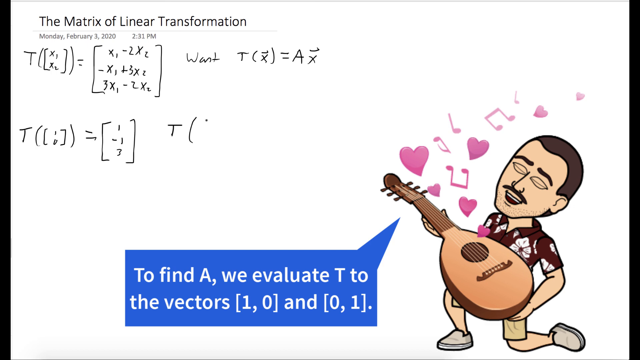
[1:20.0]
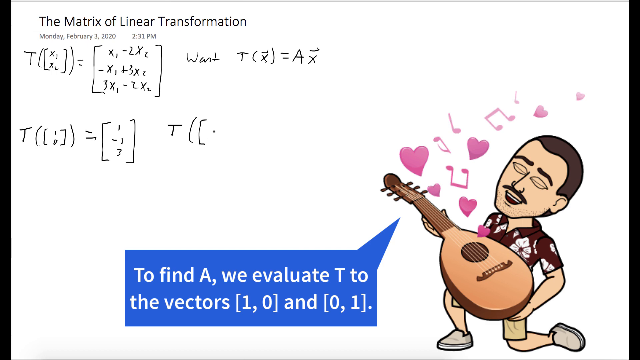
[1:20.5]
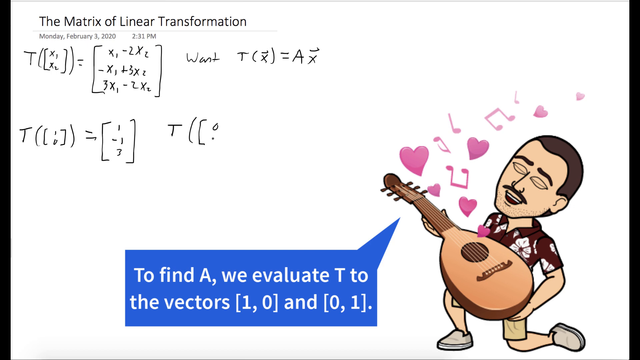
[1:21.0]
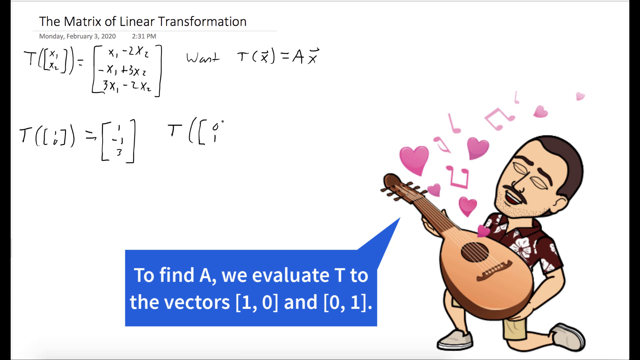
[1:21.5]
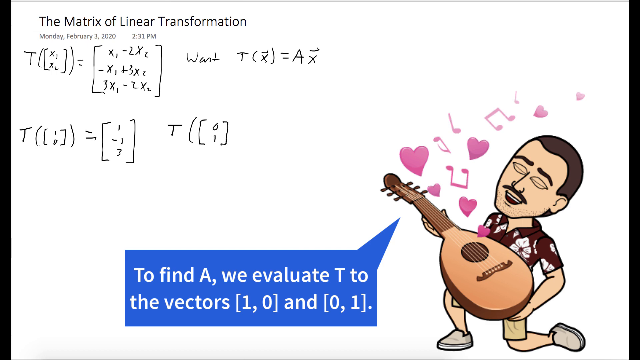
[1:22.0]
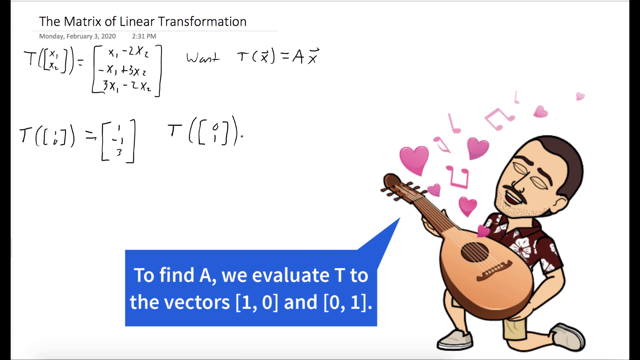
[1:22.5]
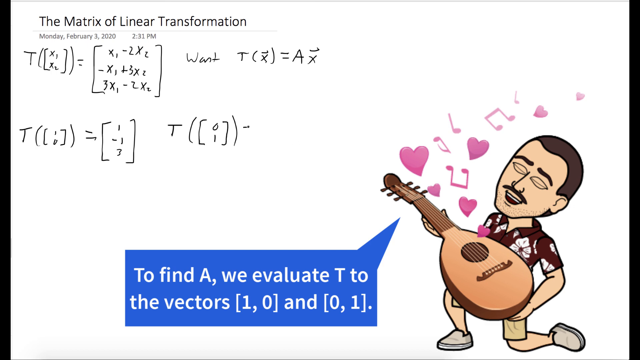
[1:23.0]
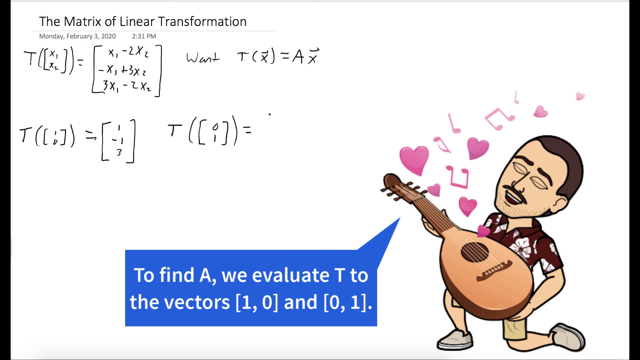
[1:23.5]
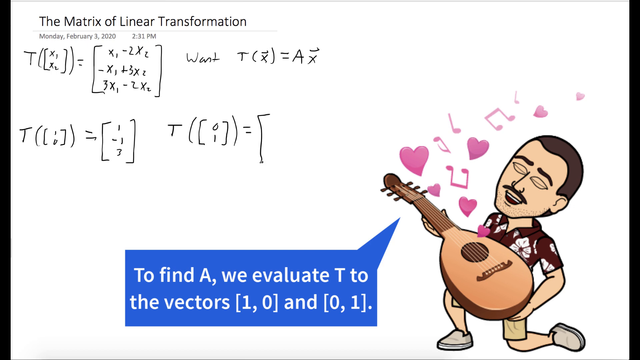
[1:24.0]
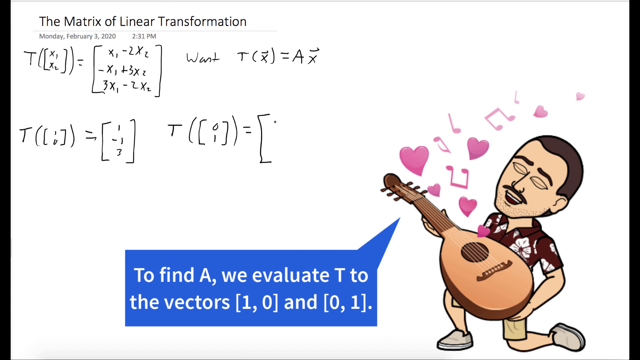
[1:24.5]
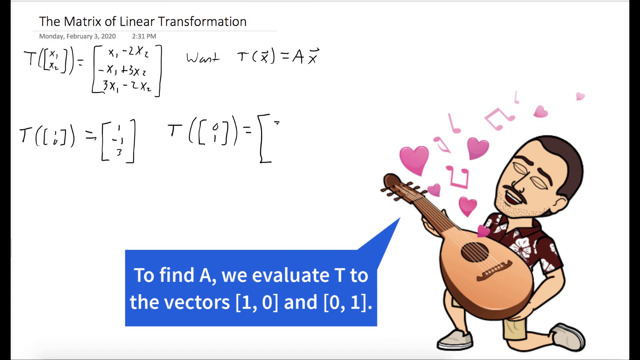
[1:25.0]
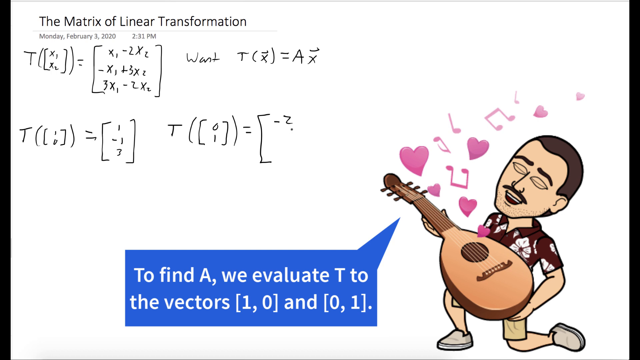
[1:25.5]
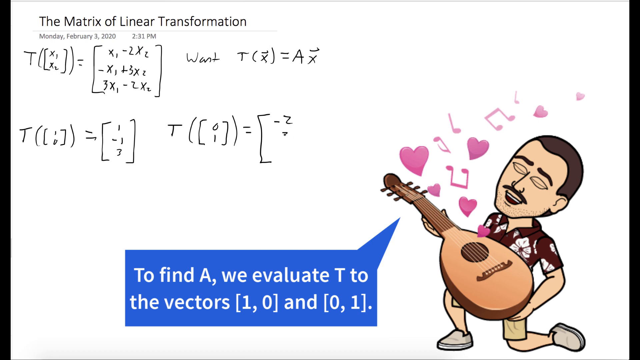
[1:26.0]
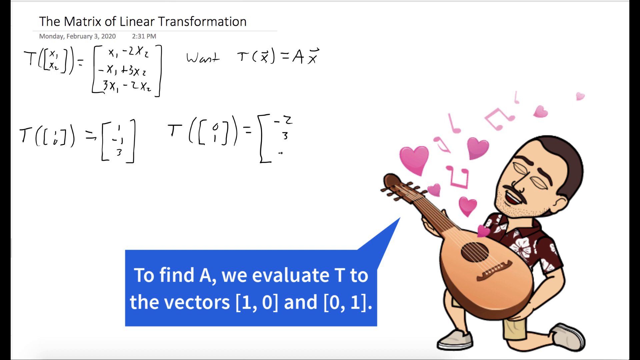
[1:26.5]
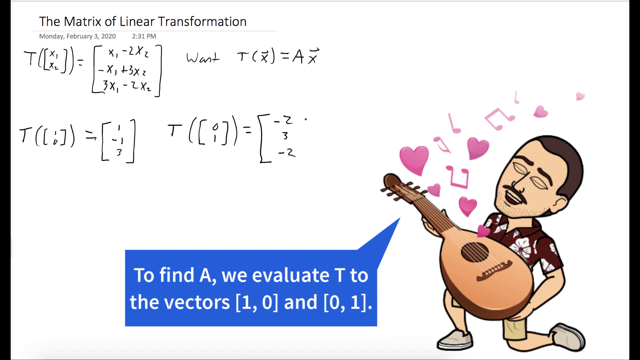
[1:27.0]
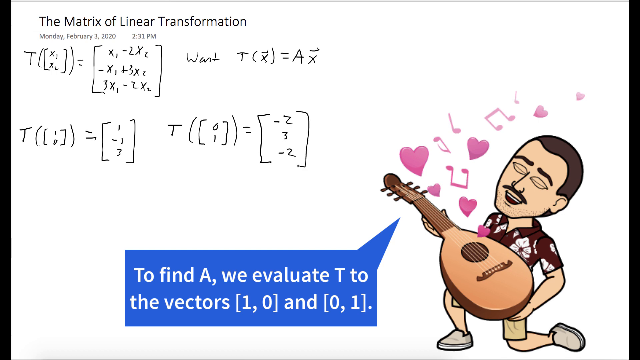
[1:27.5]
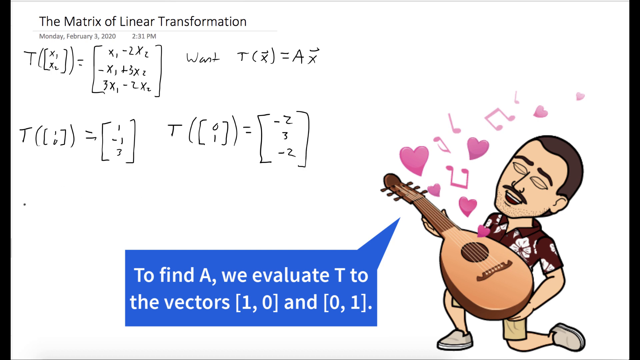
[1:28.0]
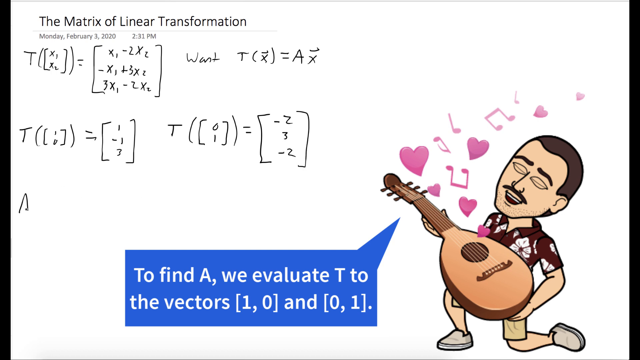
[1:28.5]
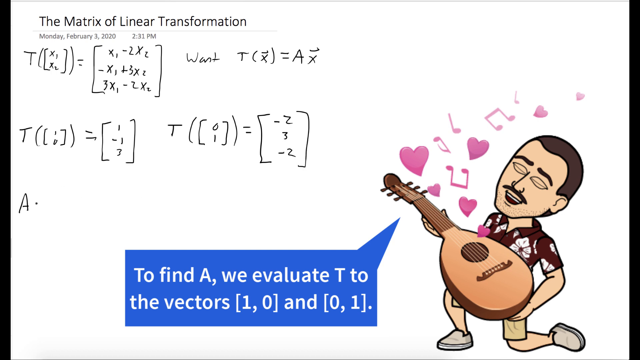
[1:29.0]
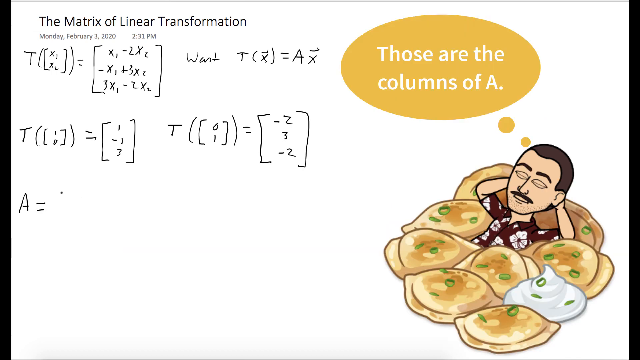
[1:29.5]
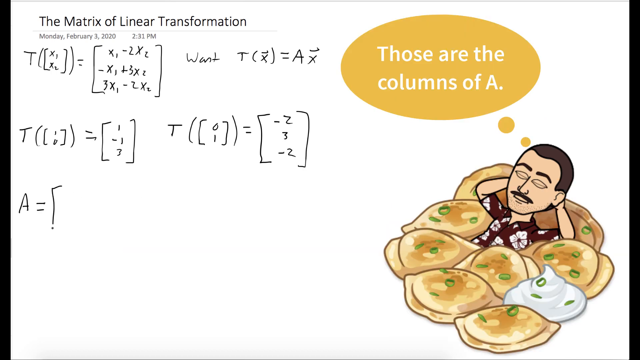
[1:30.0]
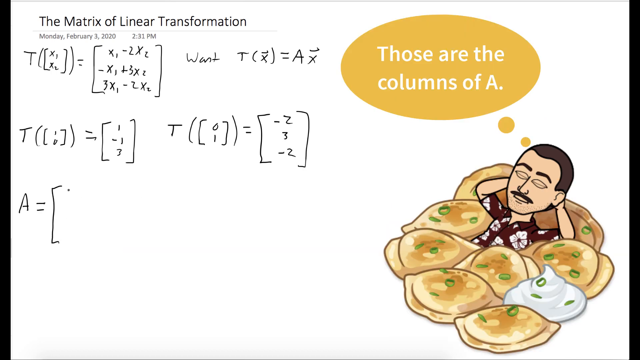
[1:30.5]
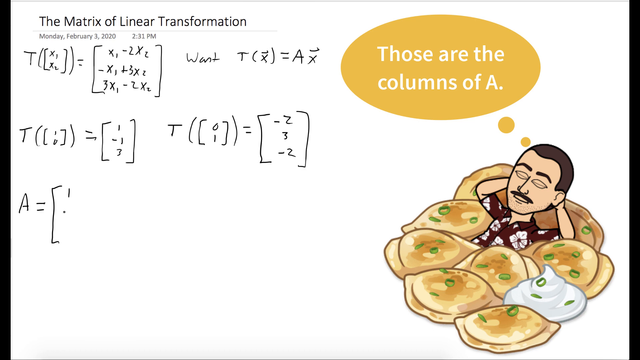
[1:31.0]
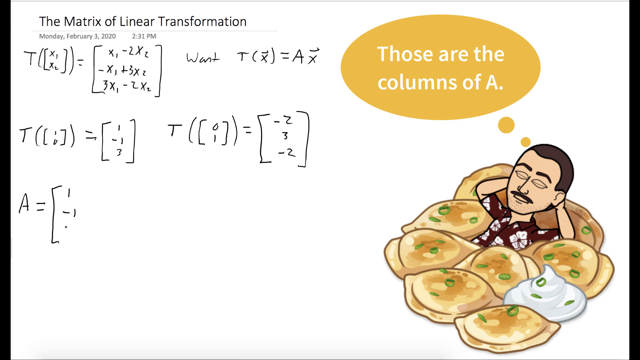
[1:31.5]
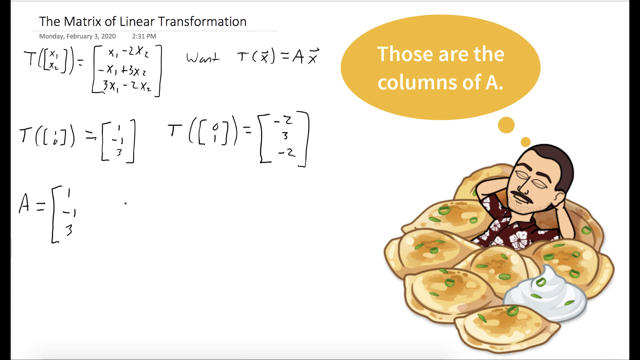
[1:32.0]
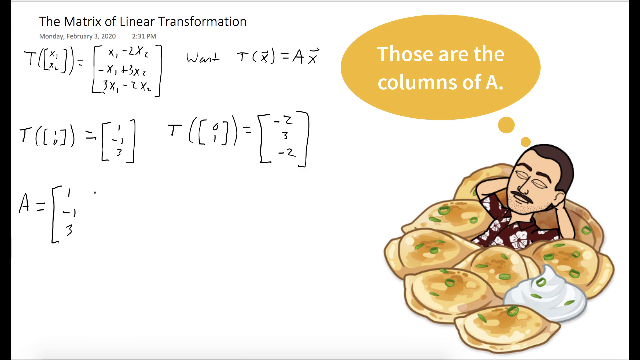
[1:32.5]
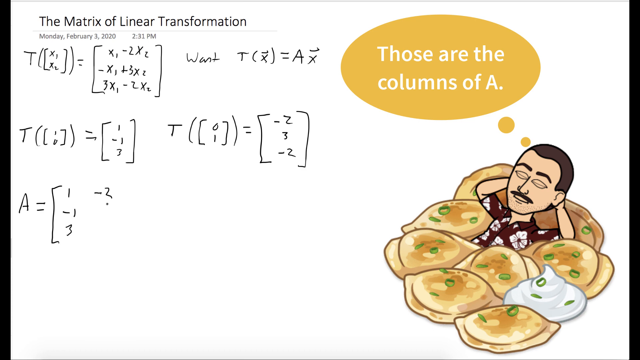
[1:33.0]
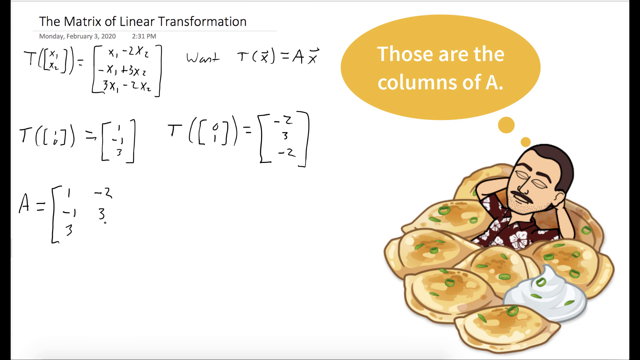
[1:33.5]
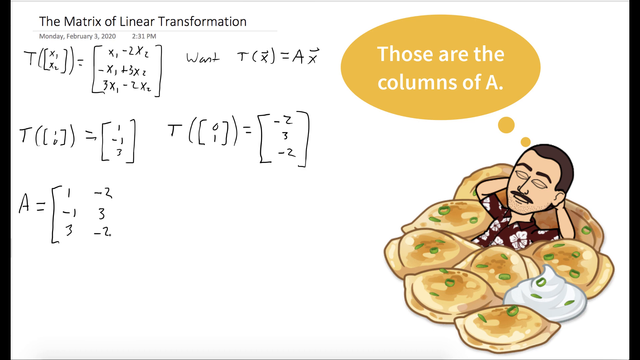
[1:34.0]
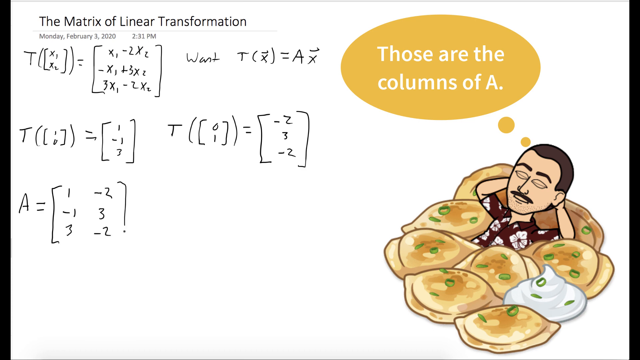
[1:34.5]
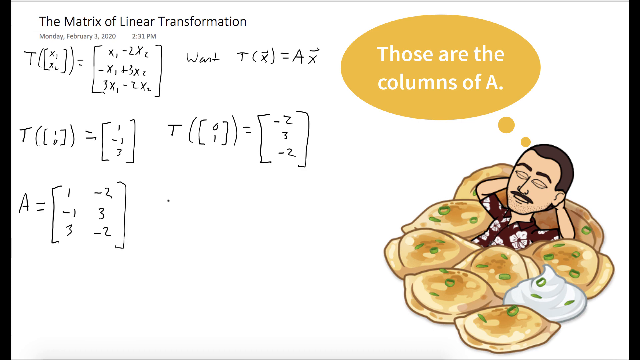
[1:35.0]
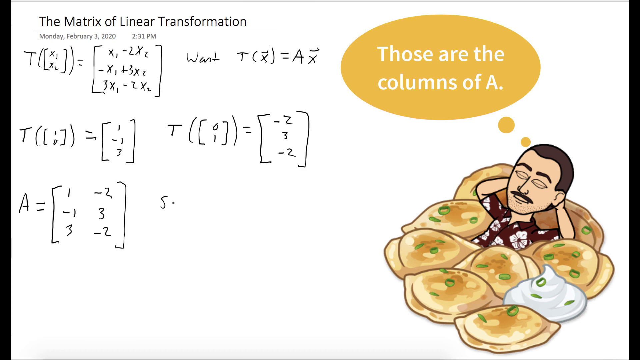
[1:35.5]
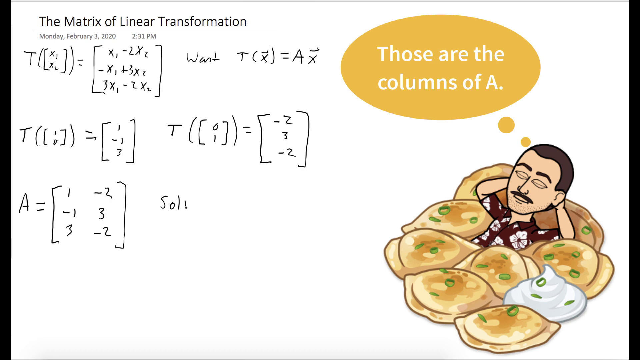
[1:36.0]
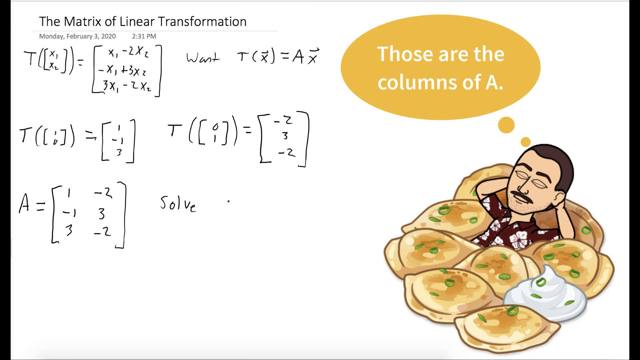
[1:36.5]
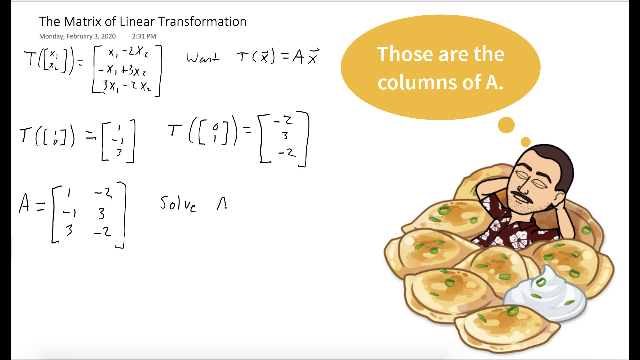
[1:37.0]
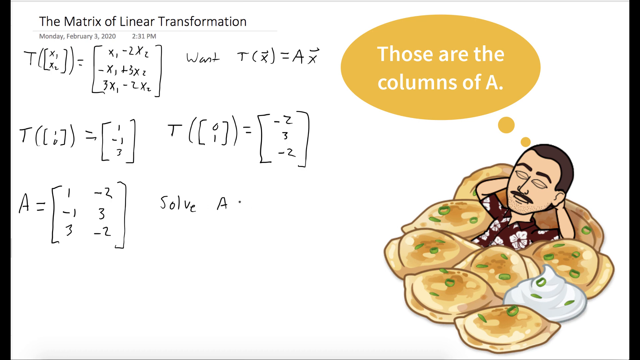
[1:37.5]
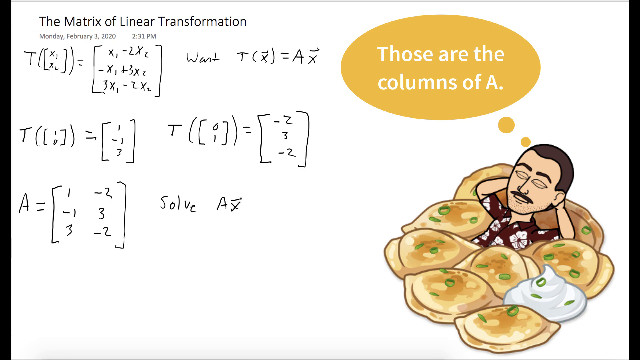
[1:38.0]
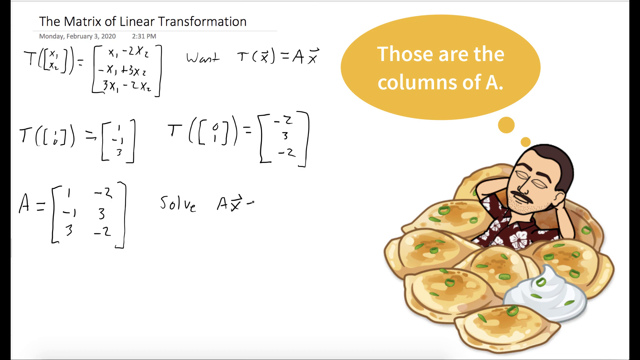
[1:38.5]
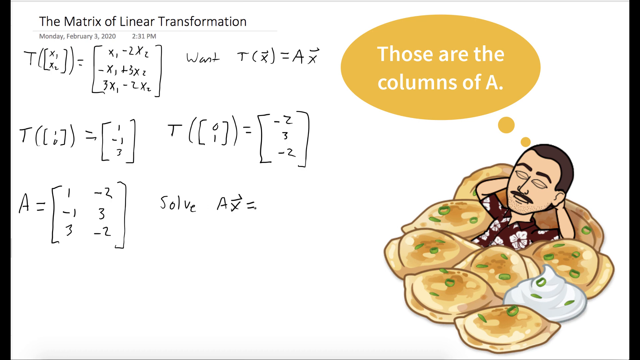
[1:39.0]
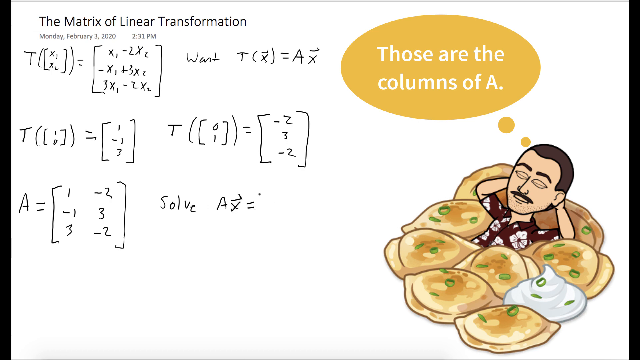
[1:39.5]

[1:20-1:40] He continues solving the problem while his cartoon version switches from the warrior pose to singing and playing a ukulele, with hearts and music notes coming out. He appears to be writing with some sort of mouse pad or drawing tablet in black ink. As he reaches a third row of answers, the cartoon changes again: he is surrounded by something egg-looking or eggs and is kind of lying in the eggs, with yellow speech bubbles reading "those are the columns of A." He seems to be sleeping or resting his head, with both arms behind him.